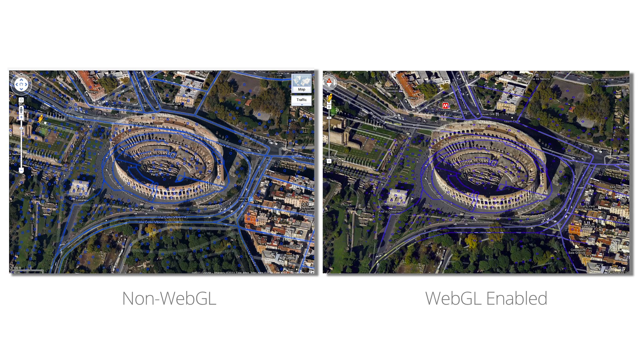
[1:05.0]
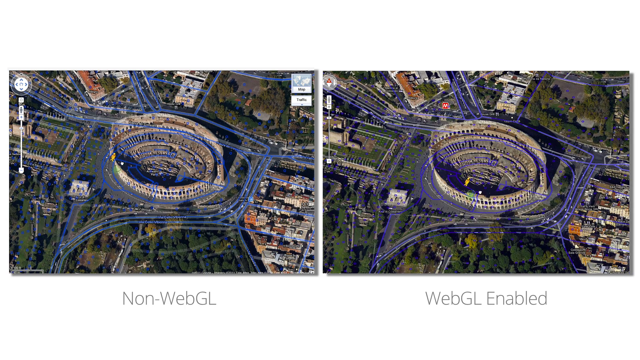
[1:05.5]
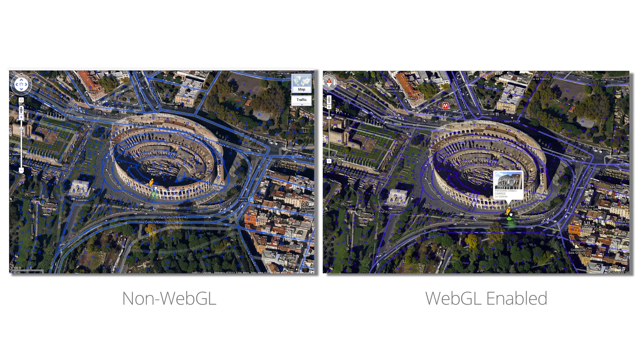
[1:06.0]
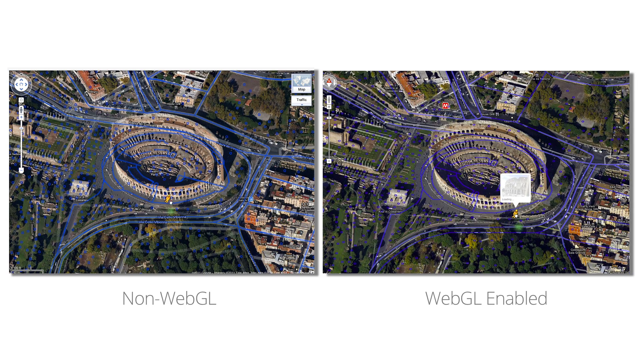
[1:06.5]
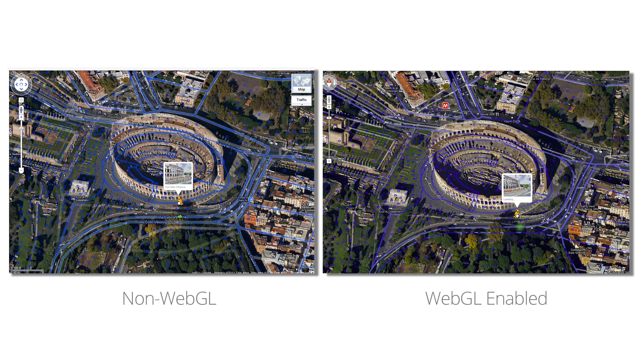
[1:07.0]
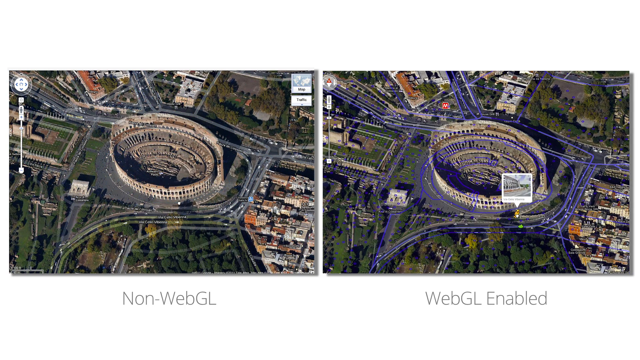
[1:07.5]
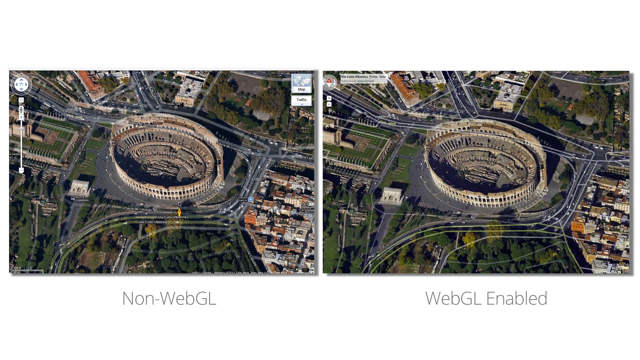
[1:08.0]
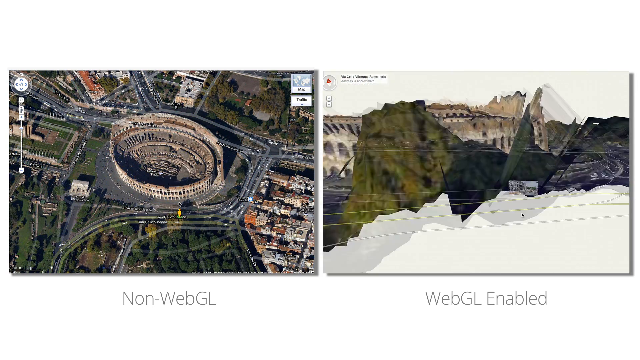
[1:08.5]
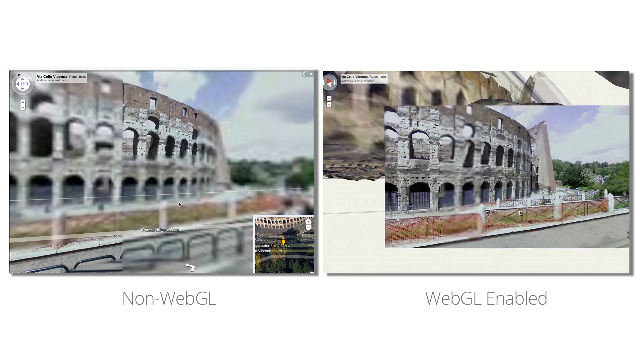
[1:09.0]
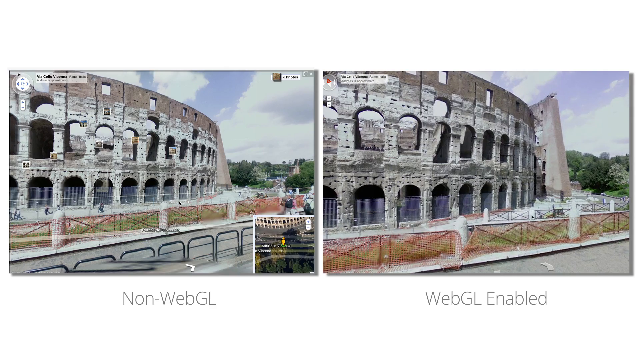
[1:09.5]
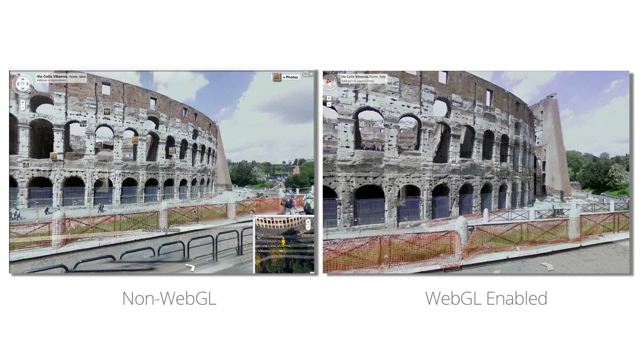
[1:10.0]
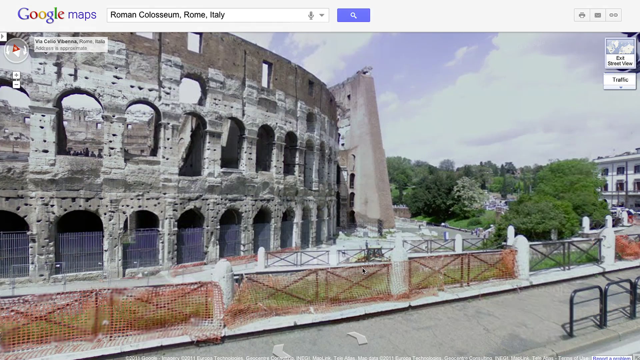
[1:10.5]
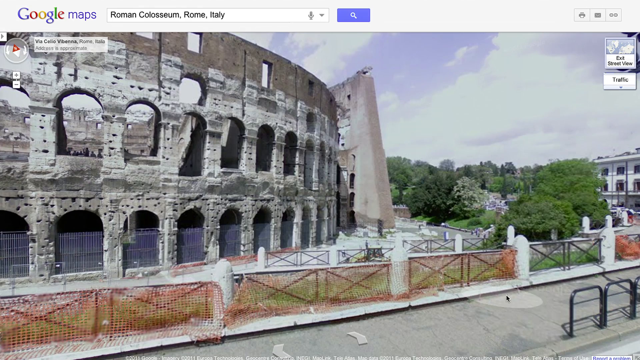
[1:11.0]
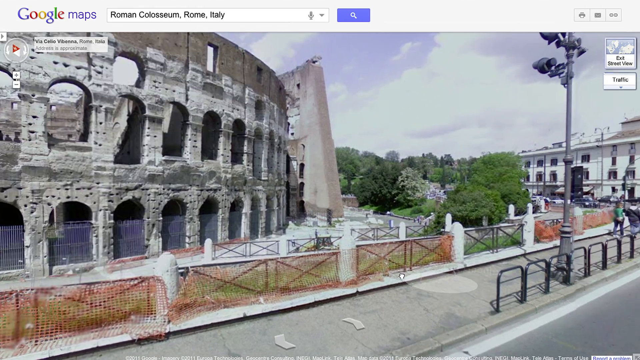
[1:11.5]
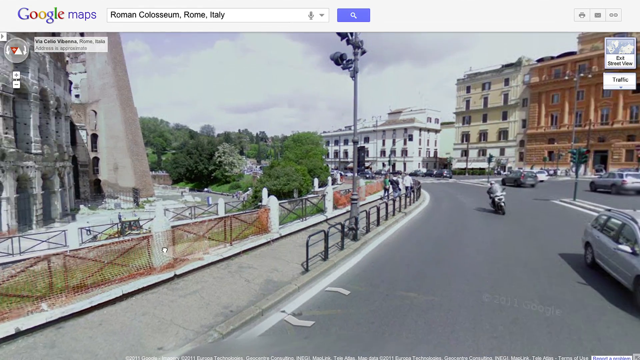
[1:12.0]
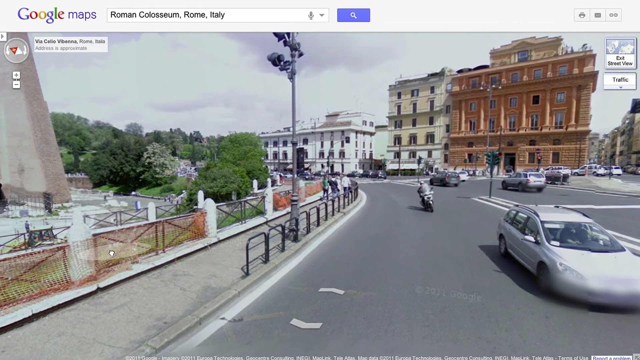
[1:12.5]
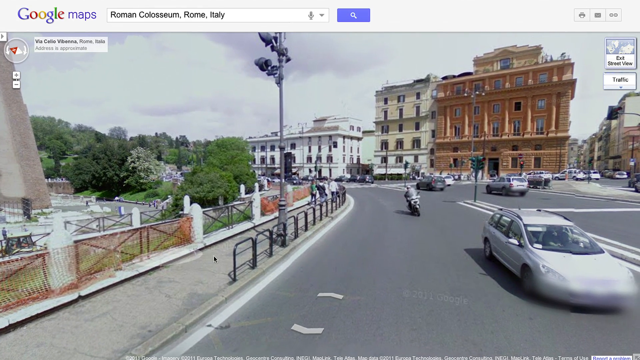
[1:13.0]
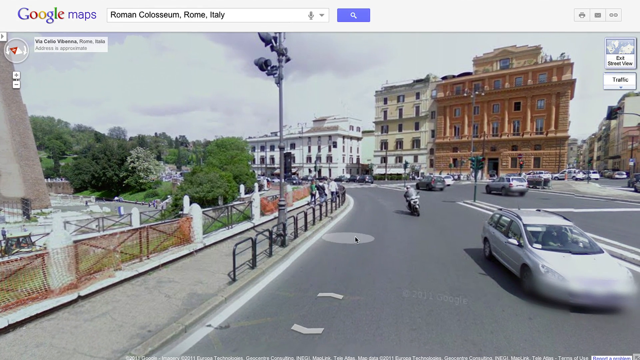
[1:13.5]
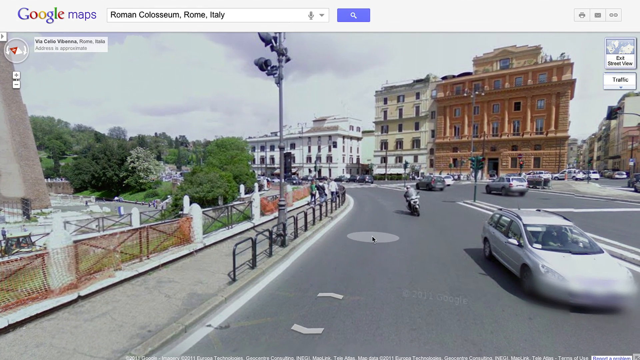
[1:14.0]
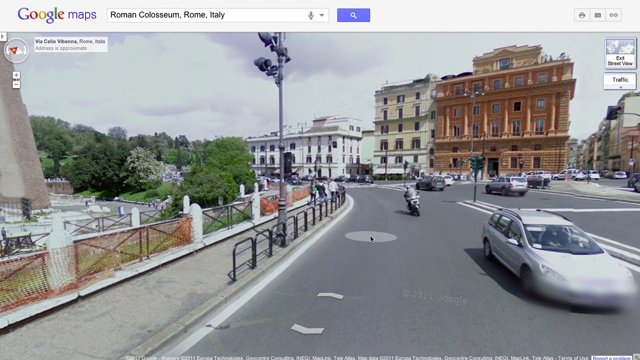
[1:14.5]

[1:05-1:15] The comparison now covers street view in the non-WebGL and WebGL-enabled versions, shown side by side over the stadium. Blue outlines appear on the map, apparently streets where the street view figure can be placed; it must be placed on one of the blue lines. The mouse clicks and drags the little street view person and picks a spot in each version. The non-WebGL version immediately clips to the street view, while the WebGL-enabled version zooms in. The street view is then shown, with the view being moved around the street.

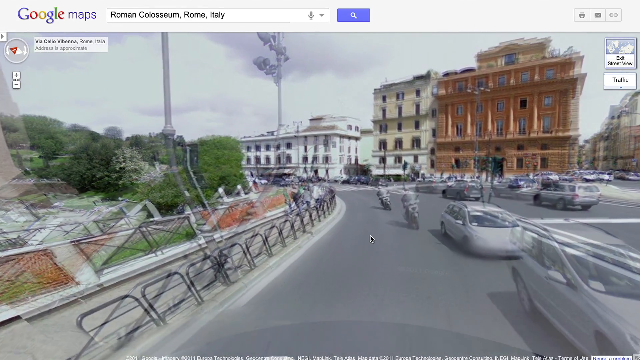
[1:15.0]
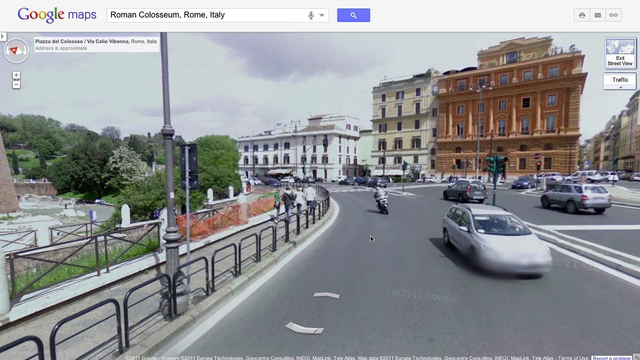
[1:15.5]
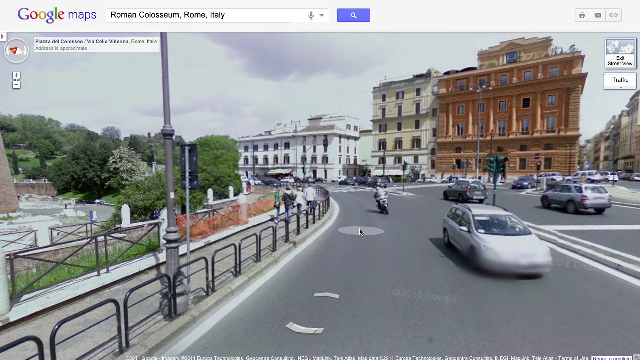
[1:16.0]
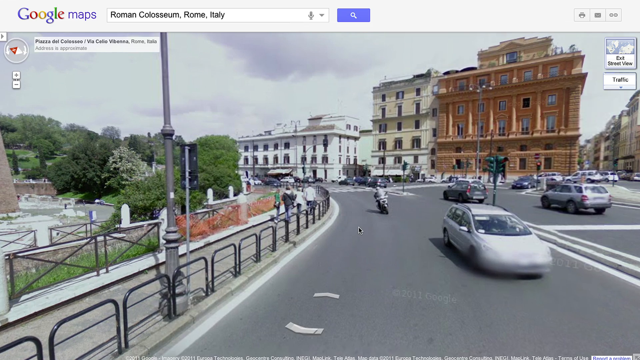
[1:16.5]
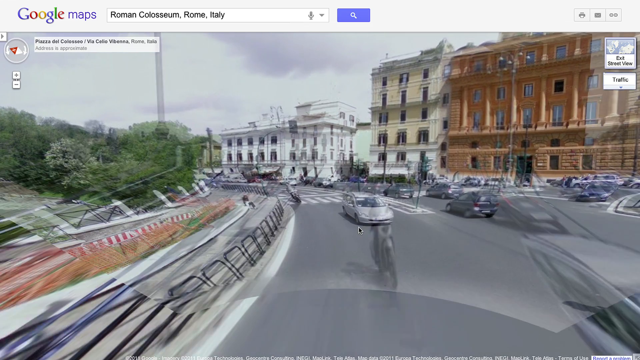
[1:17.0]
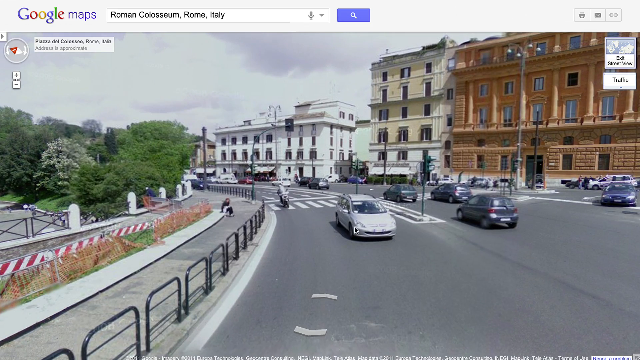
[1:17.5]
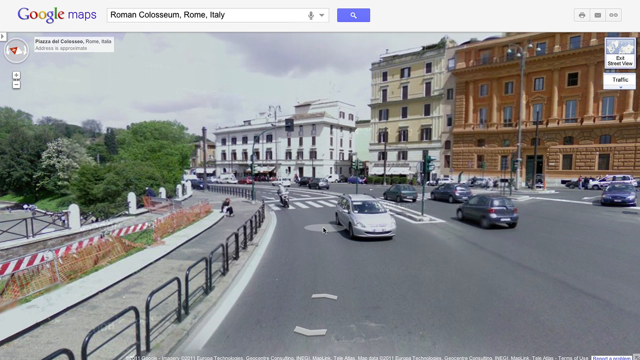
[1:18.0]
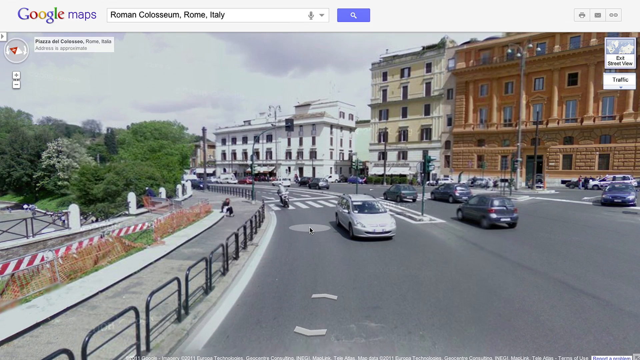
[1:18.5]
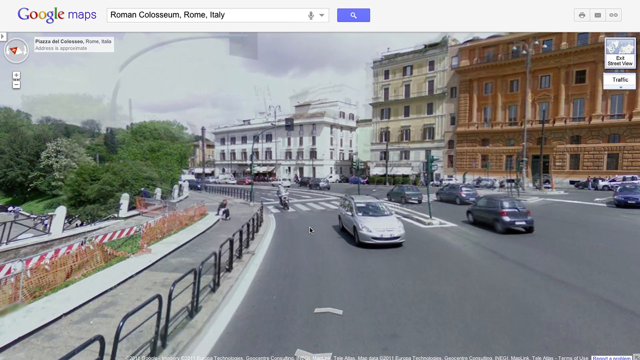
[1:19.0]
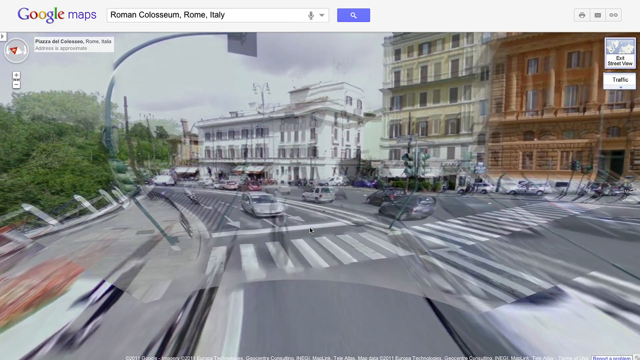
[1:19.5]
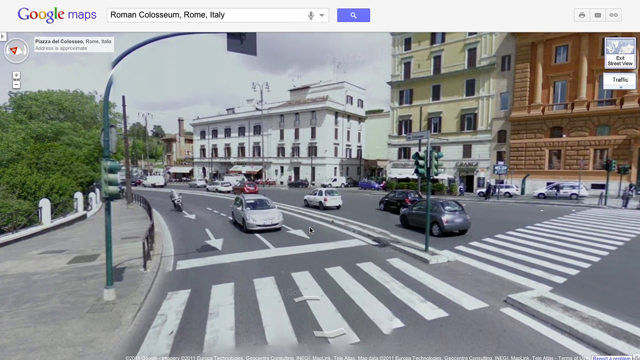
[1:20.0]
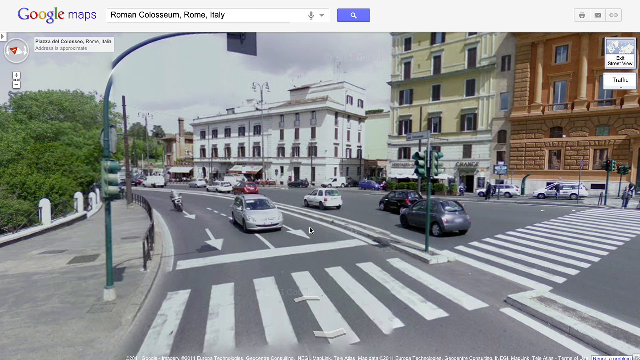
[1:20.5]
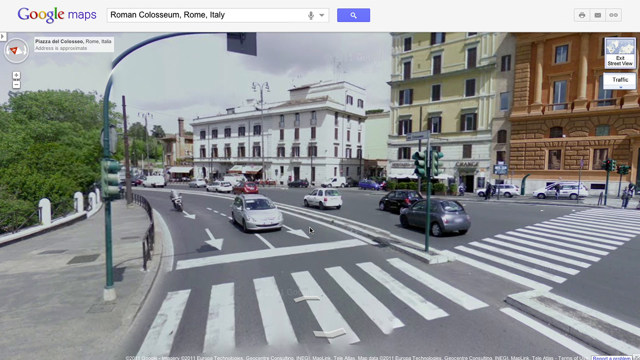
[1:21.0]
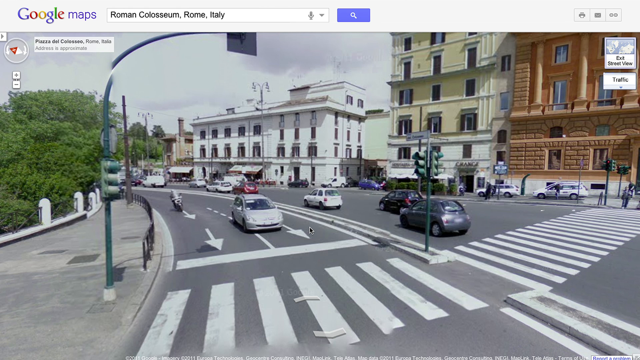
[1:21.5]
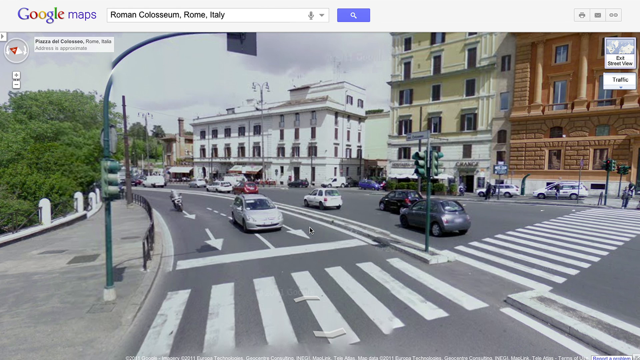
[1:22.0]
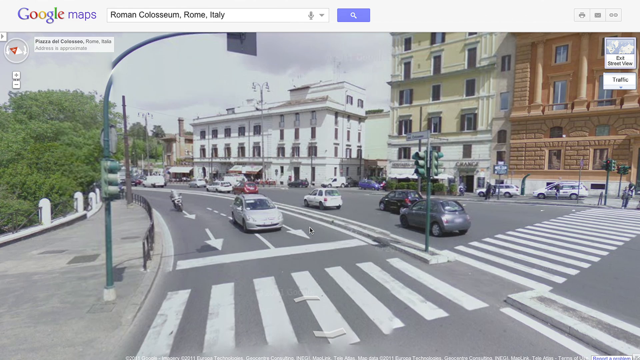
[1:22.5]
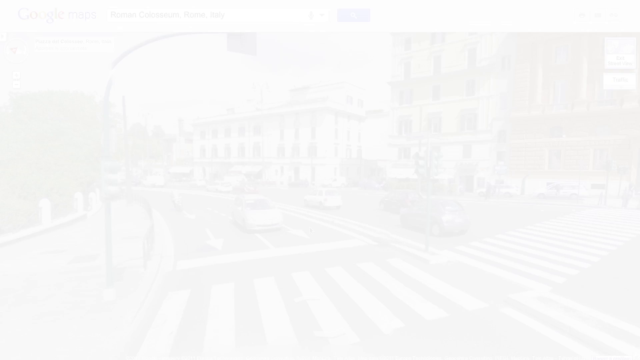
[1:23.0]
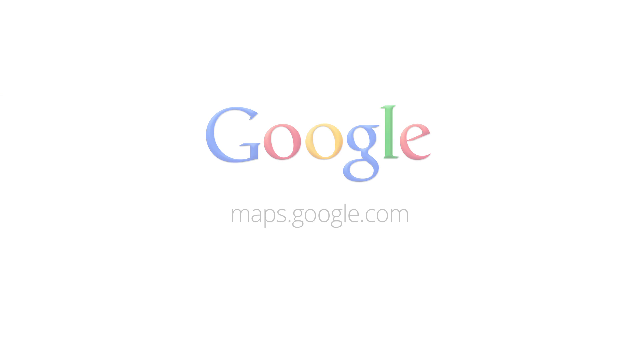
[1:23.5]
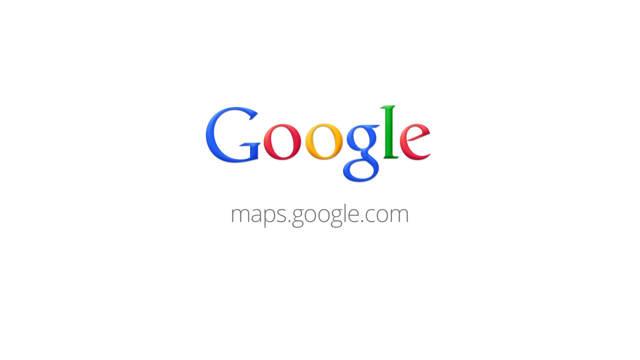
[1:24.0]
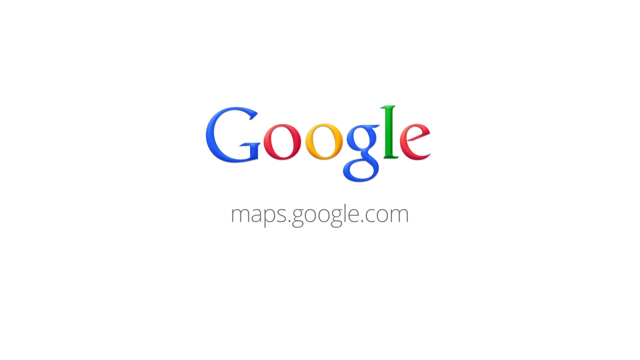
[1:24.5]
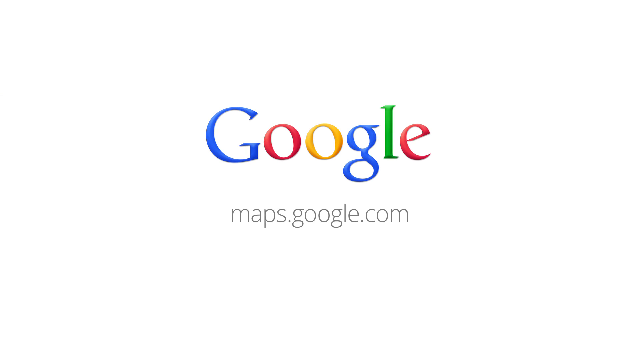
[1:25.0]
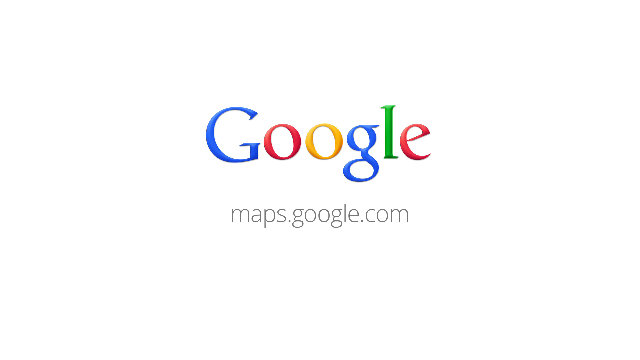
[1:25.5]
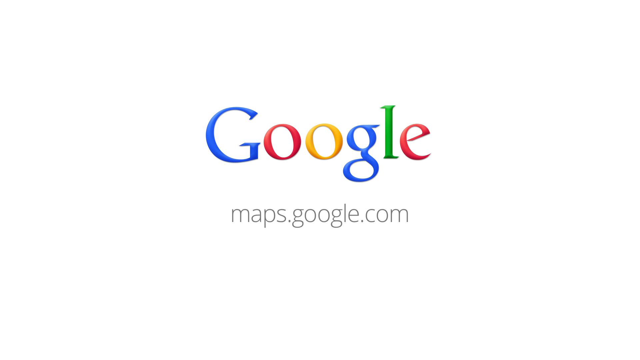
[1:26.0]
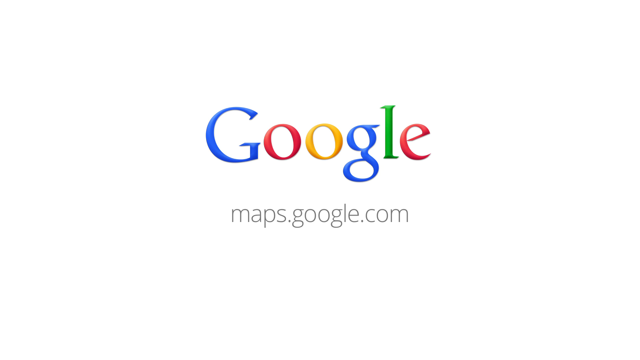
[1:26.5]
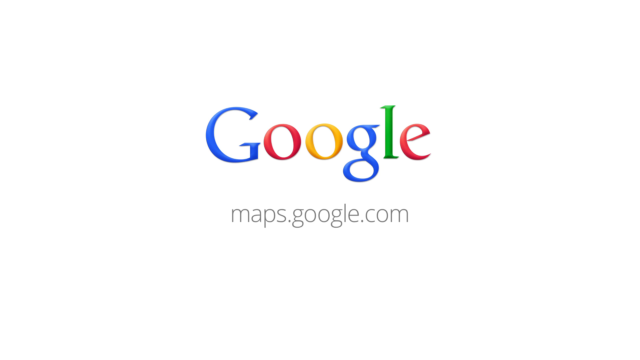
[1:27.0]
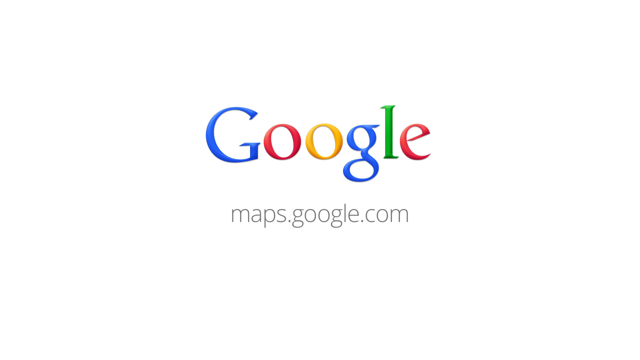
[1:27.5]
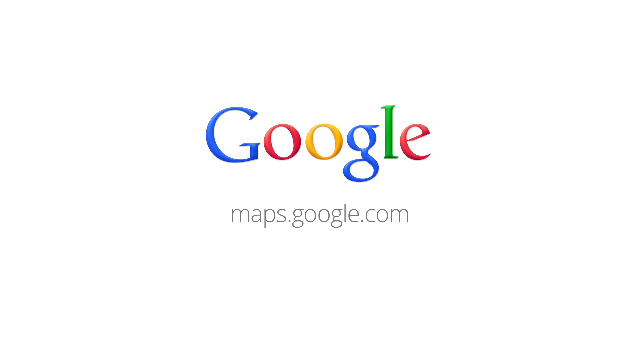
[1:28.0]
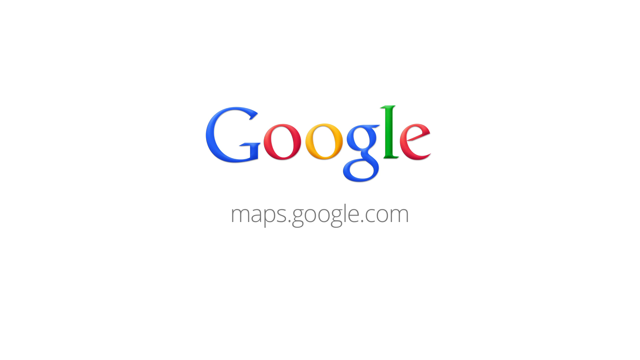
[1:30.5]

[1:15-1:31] Street view is shown in more detail: clicking the arrows moves forward along the street, and the view progresses down the street, transitioning between the images Google has taken of it. The stadium is to the side, with buildings in front and cars. The transitions show that these are 3D images rather than live video. The video then ends on a slide reading "Google" with the Google icon, and underneath it the link "maps.google.com".